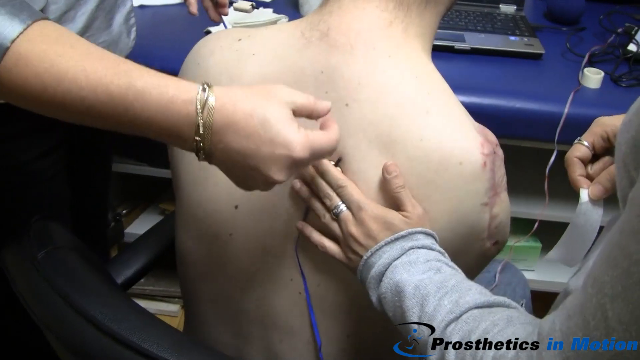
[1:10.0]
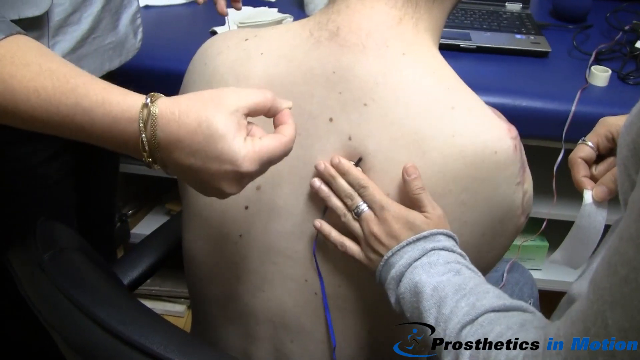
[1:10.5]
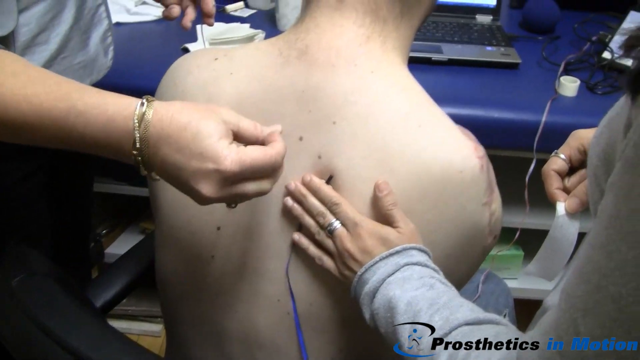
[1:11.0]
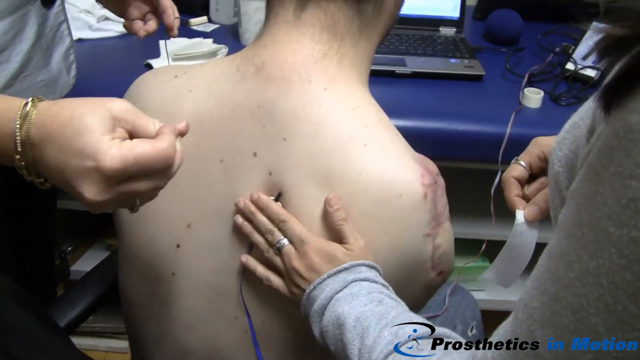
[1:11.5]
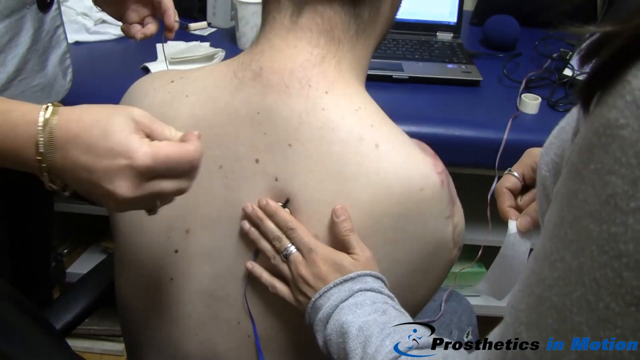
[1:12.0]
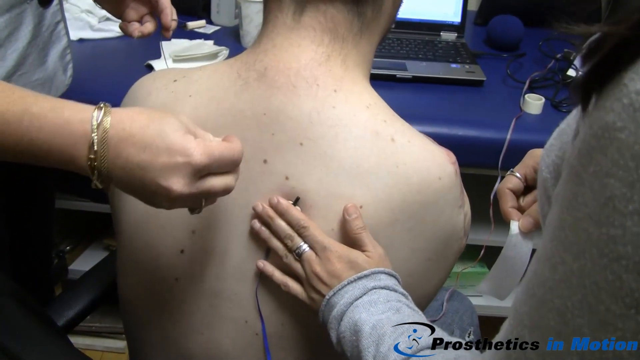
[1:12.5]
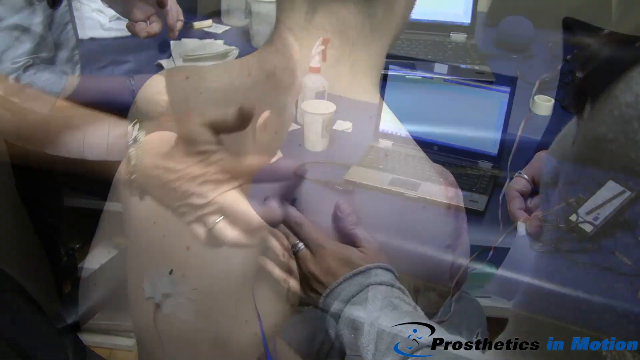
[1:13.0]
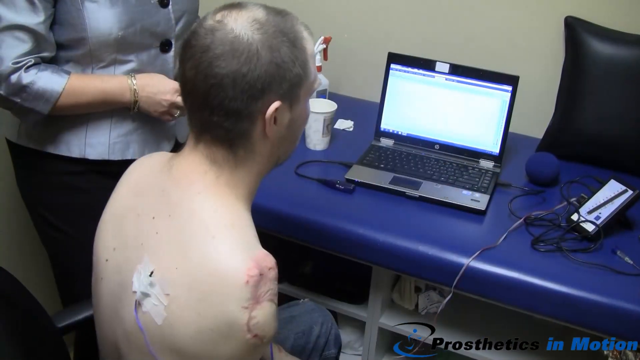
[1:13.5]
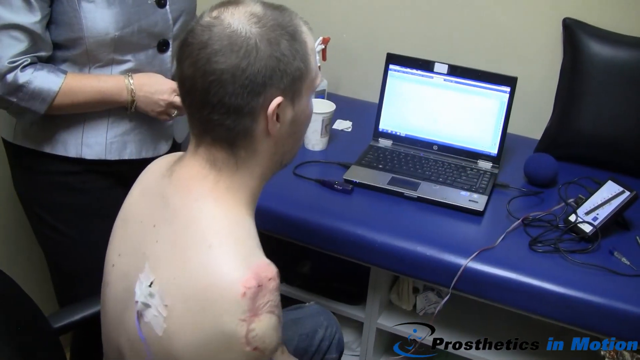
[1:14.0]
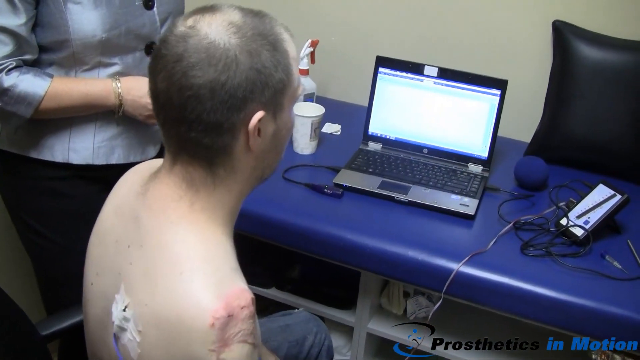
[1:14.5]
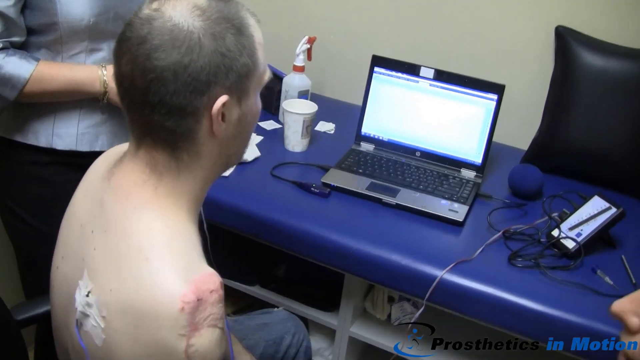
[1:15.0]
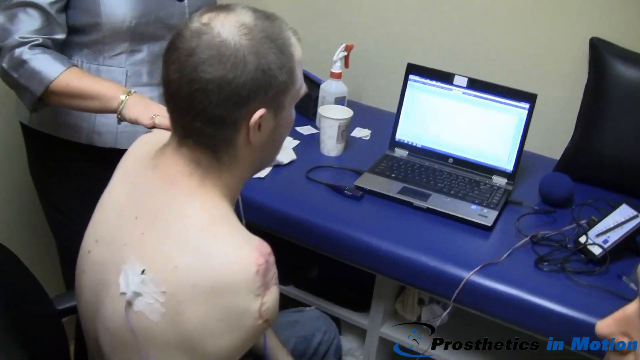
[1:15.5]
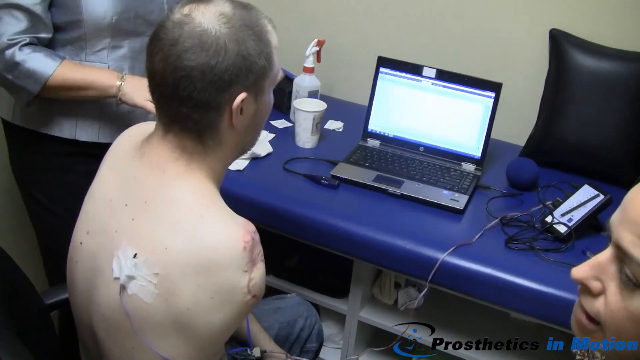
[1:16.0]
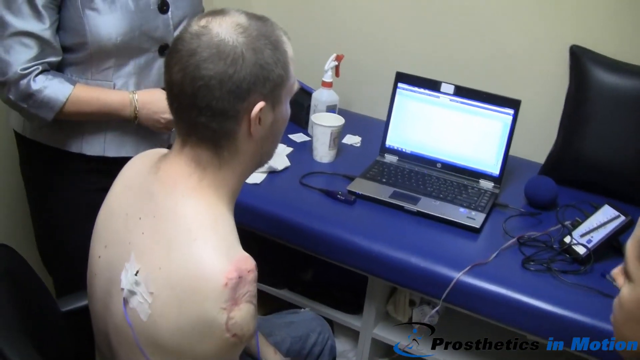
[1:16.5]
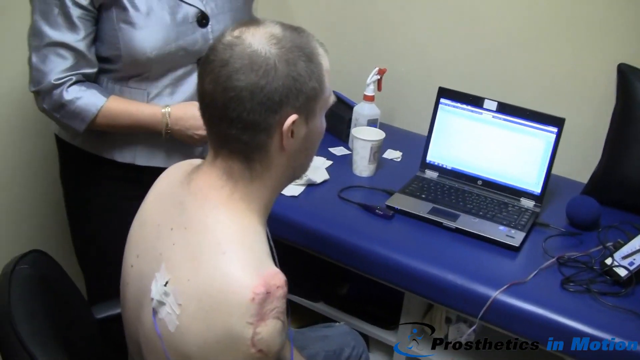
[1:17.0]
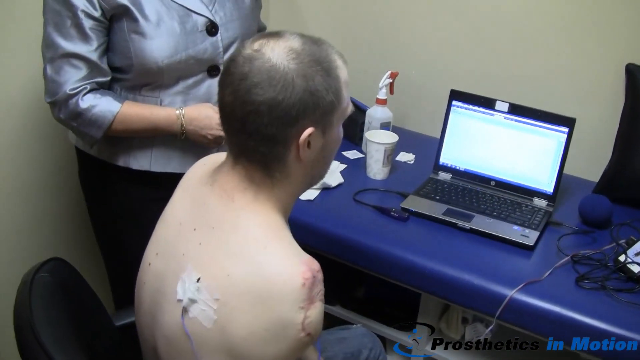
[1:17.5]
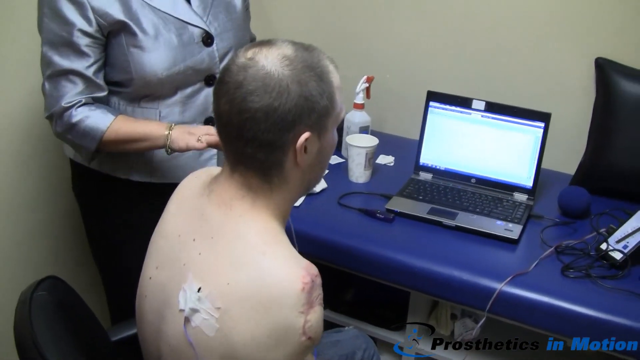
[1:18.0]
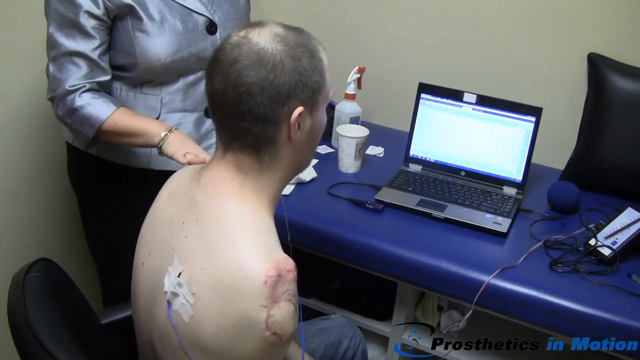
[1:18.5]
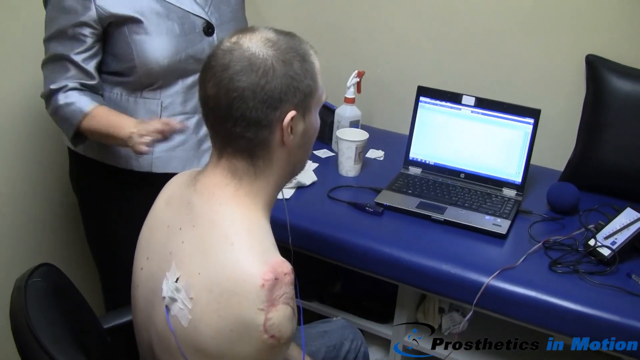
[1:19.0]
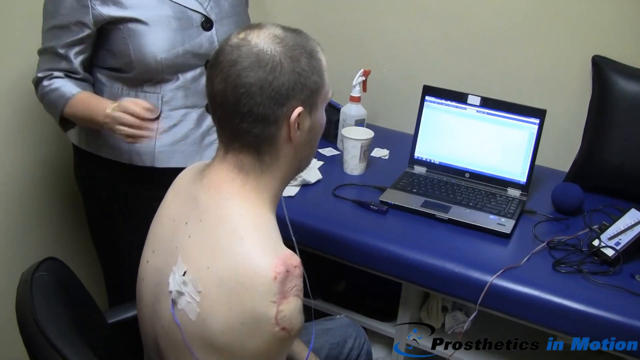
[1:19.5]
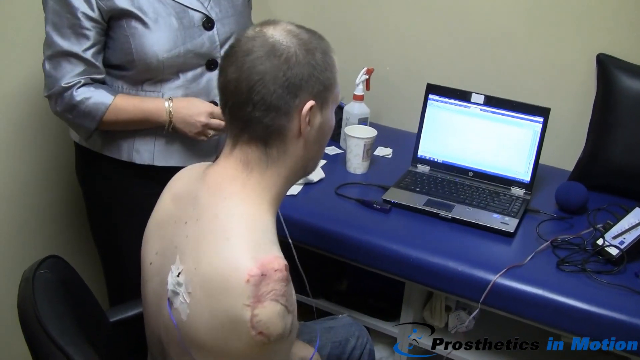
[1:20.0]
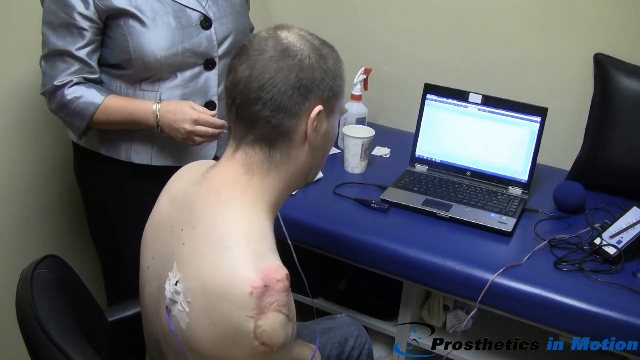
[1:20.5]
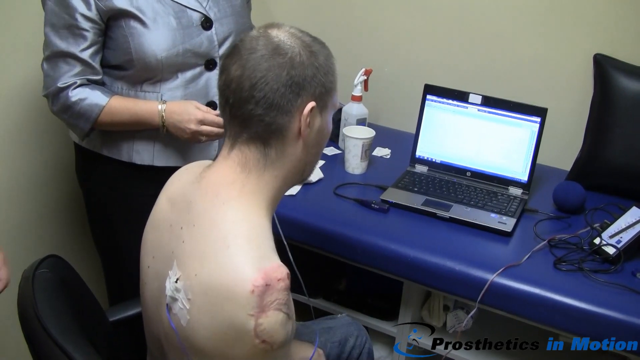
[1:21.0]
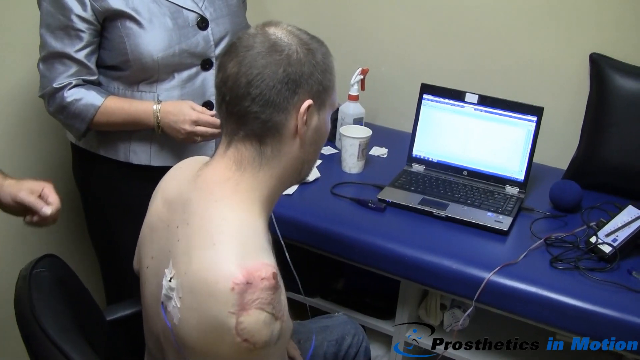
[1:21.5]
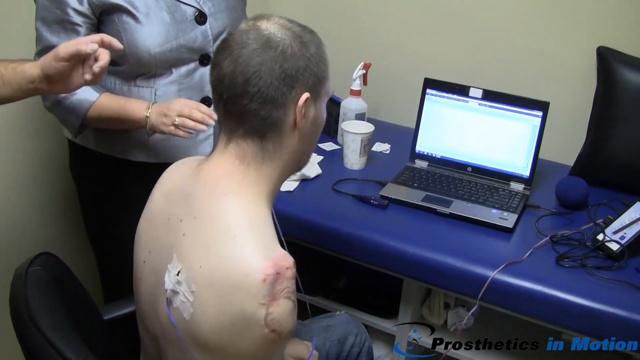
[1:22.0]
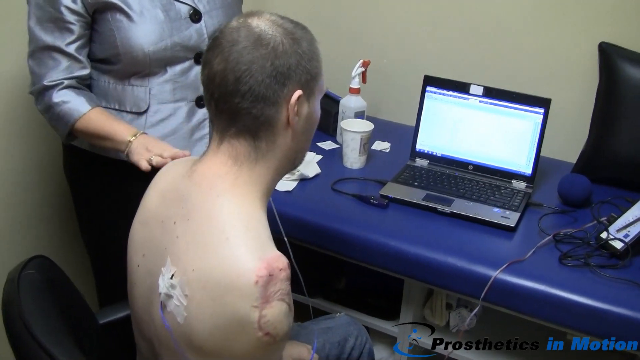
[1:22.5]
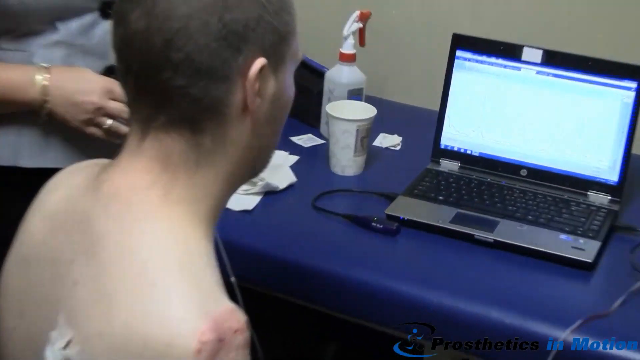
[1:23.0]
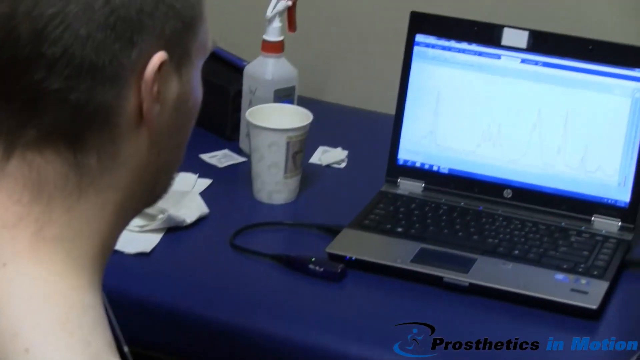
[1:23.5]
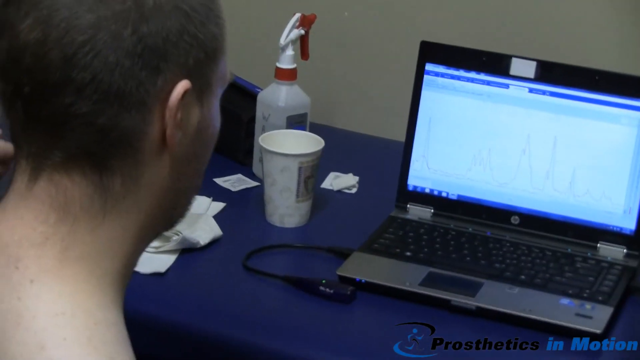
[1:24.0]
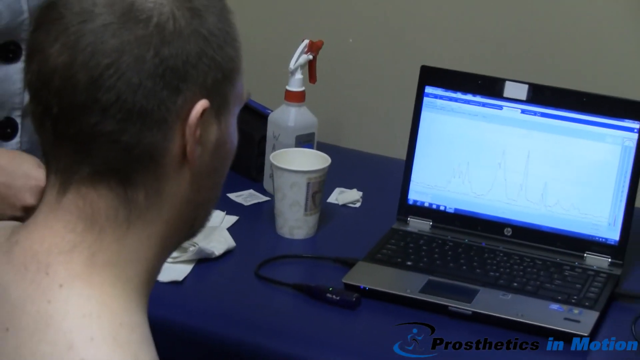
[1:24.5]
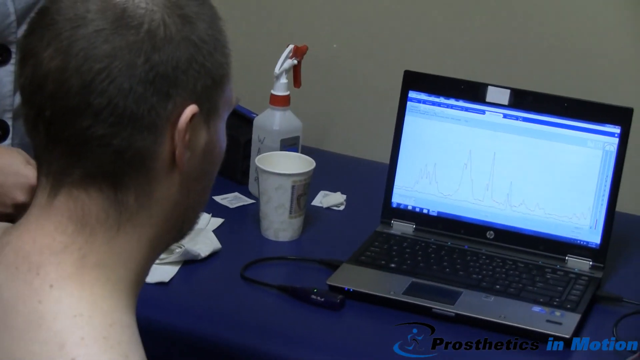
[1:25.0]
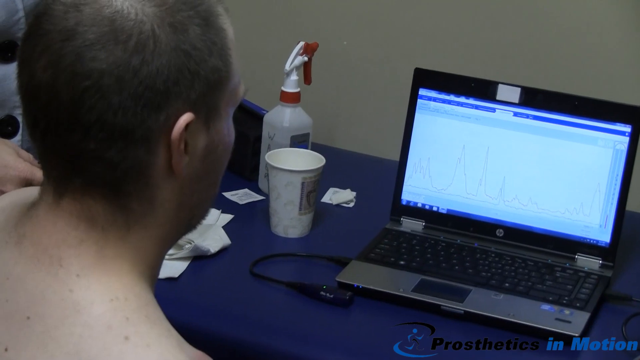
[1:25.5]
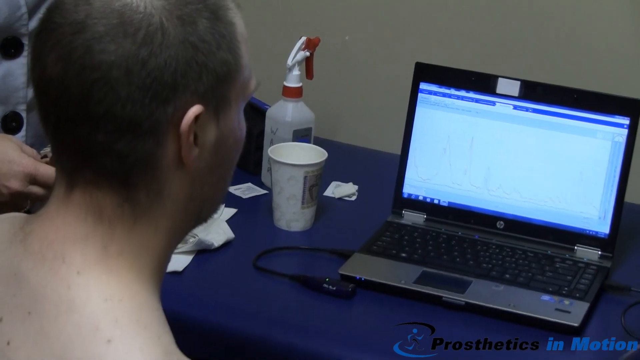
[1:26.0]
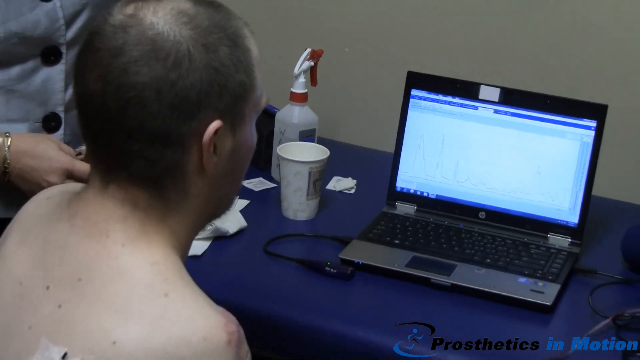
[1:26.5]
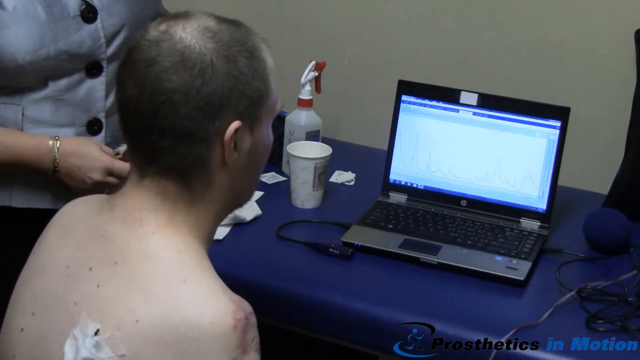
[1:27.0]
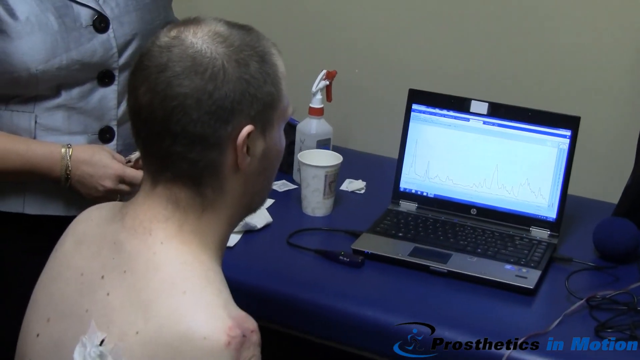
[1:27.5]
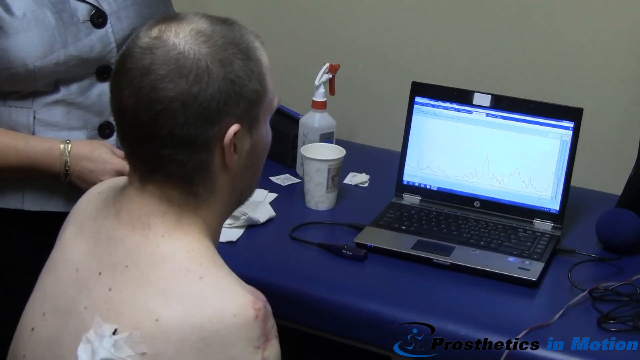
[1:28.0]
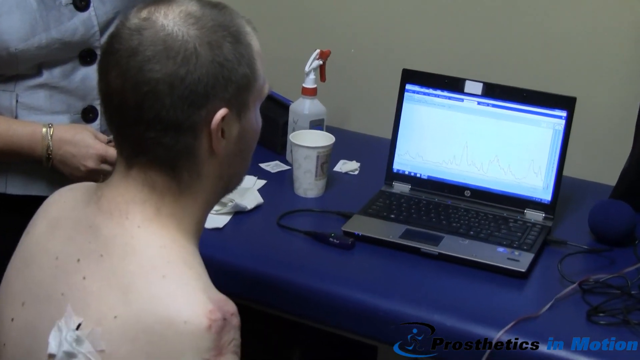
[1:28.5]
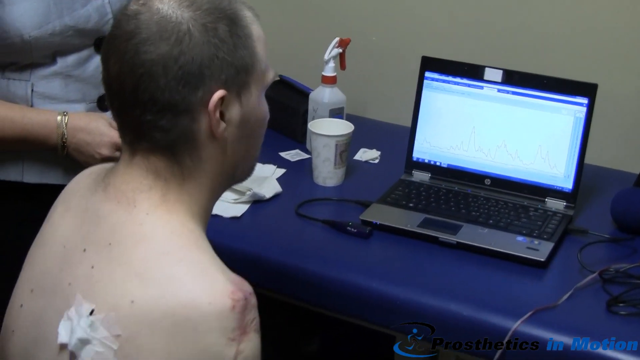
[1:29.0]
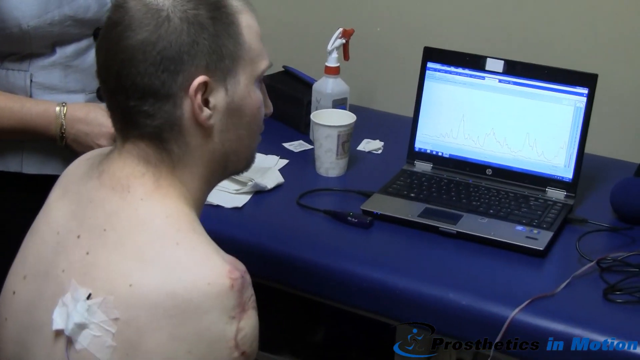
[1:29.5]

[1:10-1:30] The shirtless man with the arm amputation at the shoulder sits on a chair while a woman with long black hair uses three fingers to press the electrode into the tip of the top of his right shoulder blade. The man flexes his shoulder blade slightly, moving it backwards and forwards. Tape has then been placed over the plastic part of the electrode, leaving the electrode point exposed. The man flexes his shoulders again while looking at the laptop on the desk or bench, repeating this movement several times. The woman in the silver jacket places her right hand on his left shoulder, then indicates off to the side with this hand. The man continues to flex his shoulder, and she taps his left shoulder again. They are all looking at the screen. The man continues to move his shoulders up and down several times.